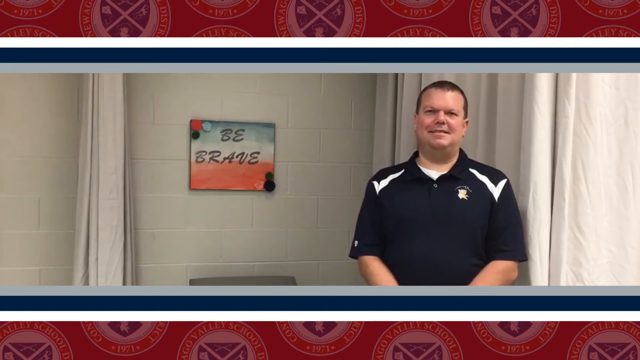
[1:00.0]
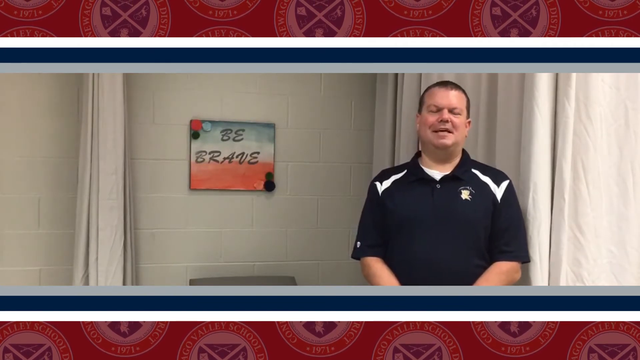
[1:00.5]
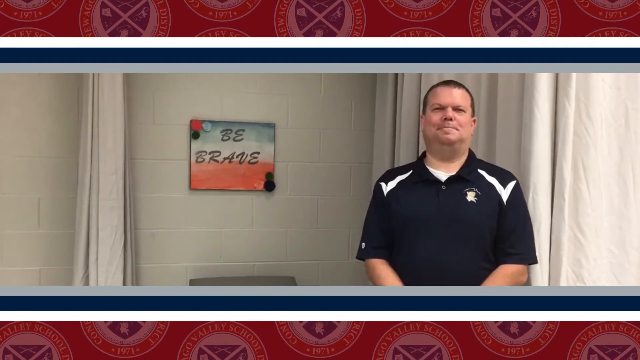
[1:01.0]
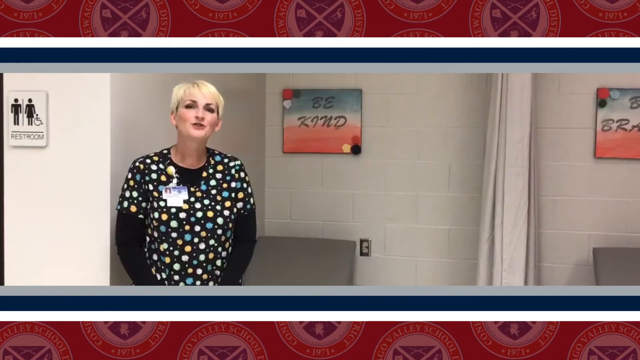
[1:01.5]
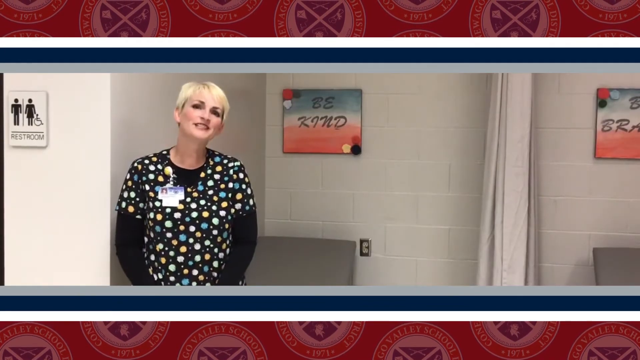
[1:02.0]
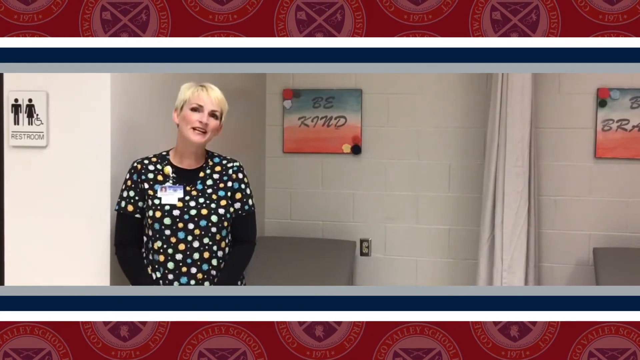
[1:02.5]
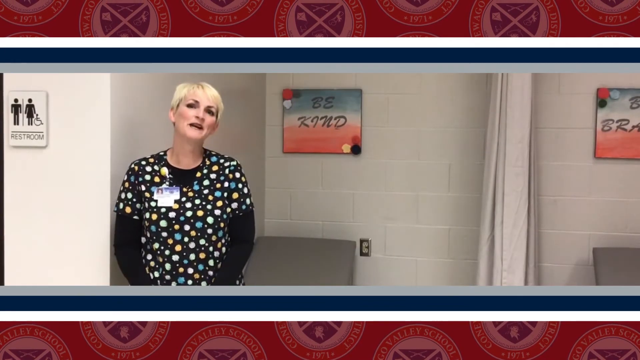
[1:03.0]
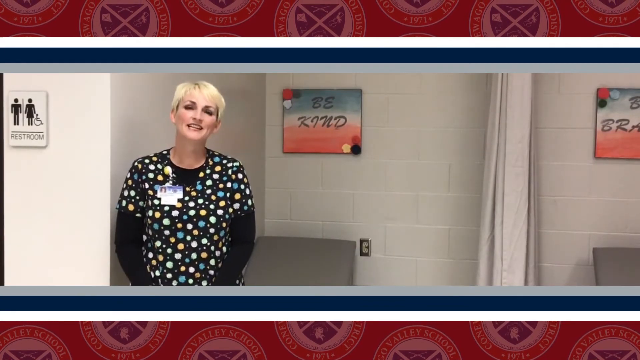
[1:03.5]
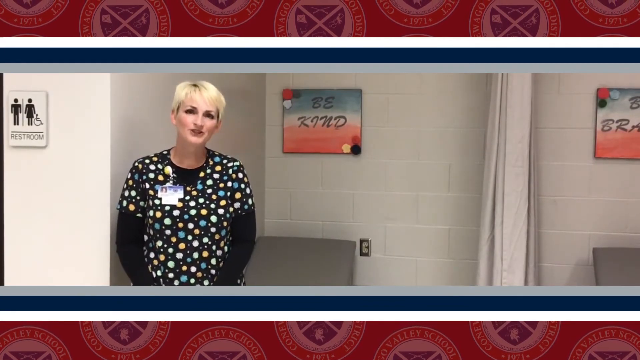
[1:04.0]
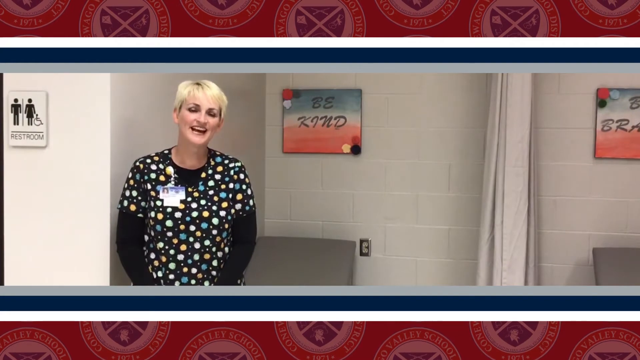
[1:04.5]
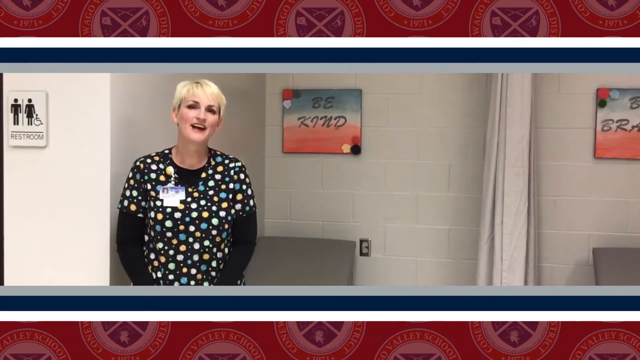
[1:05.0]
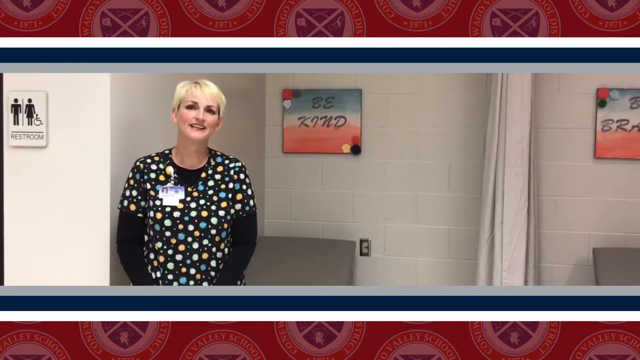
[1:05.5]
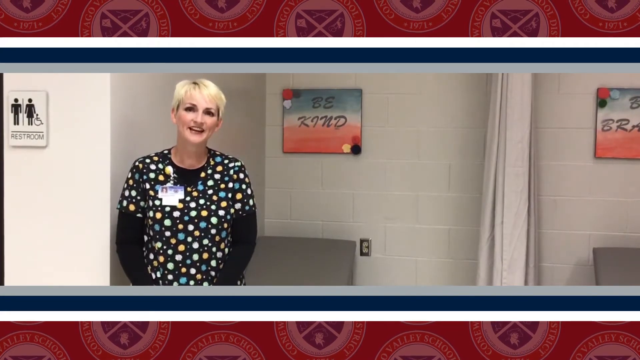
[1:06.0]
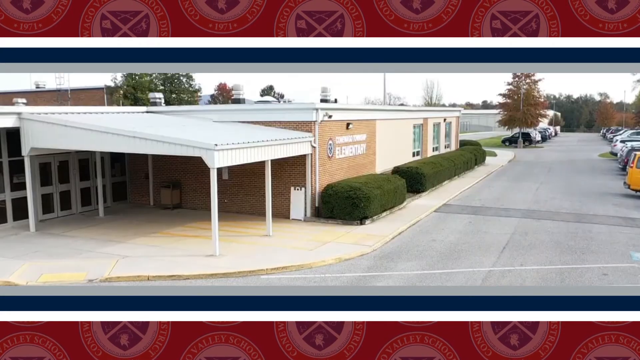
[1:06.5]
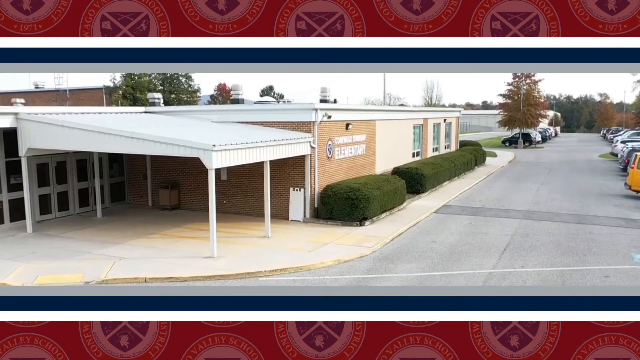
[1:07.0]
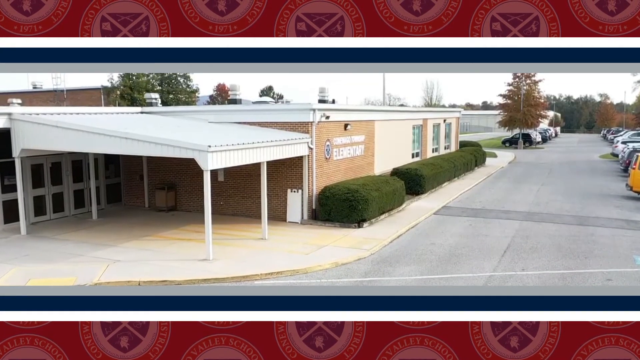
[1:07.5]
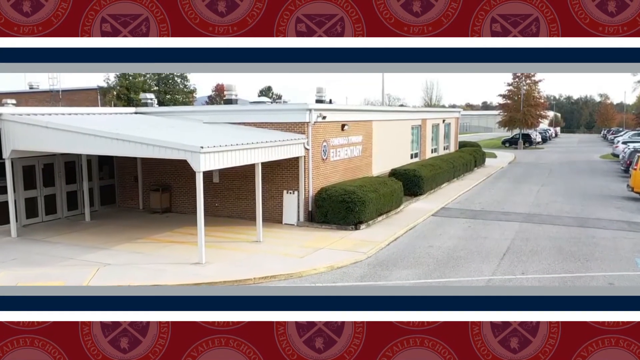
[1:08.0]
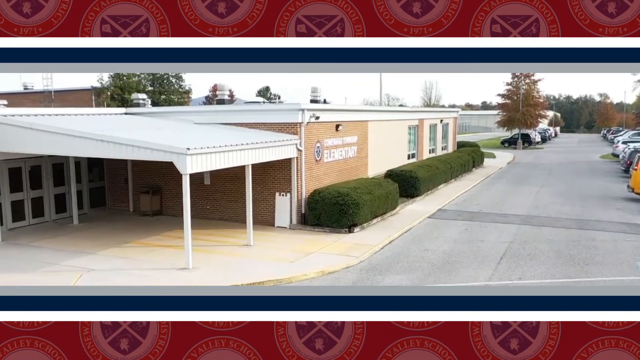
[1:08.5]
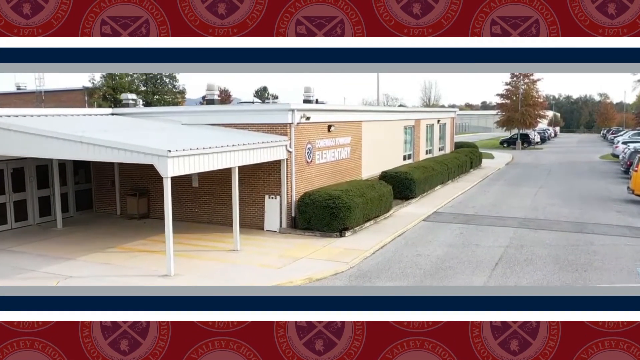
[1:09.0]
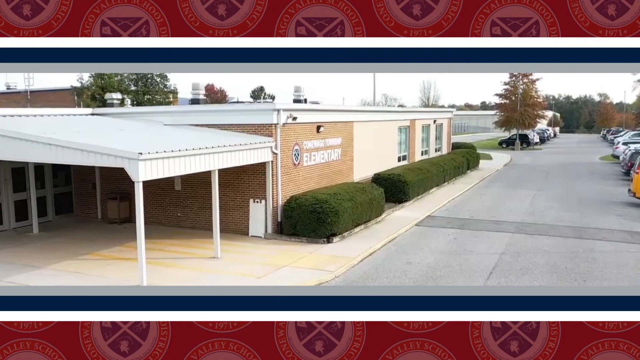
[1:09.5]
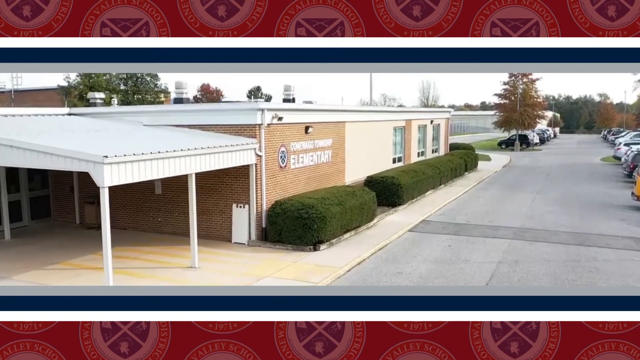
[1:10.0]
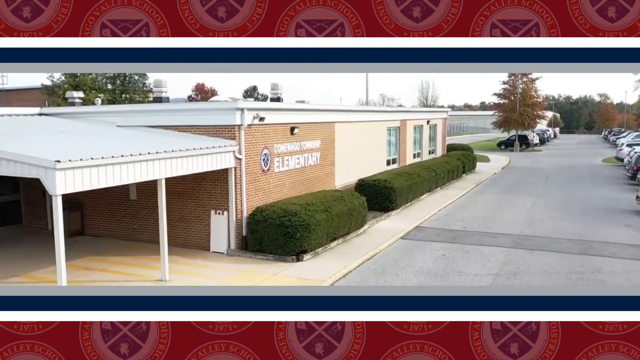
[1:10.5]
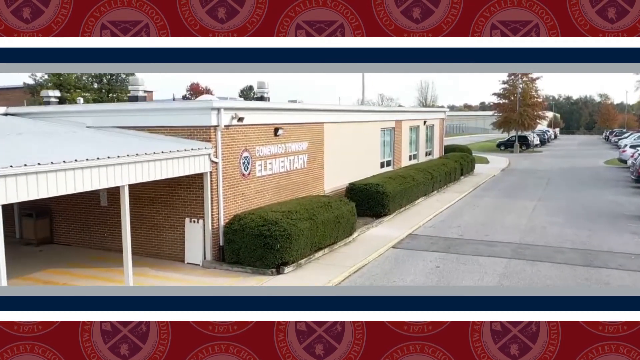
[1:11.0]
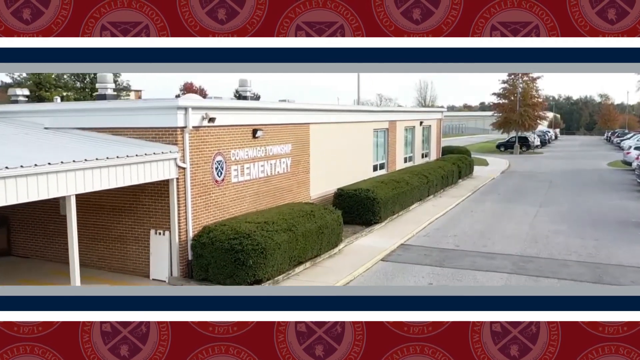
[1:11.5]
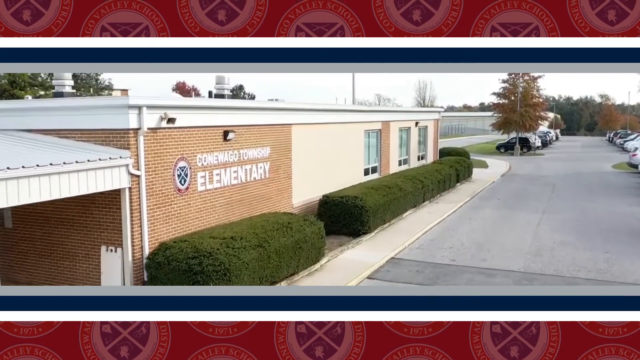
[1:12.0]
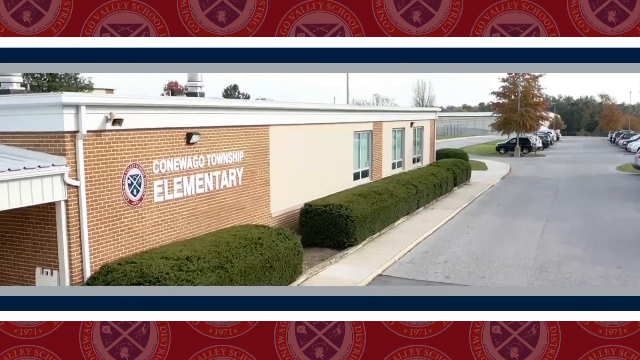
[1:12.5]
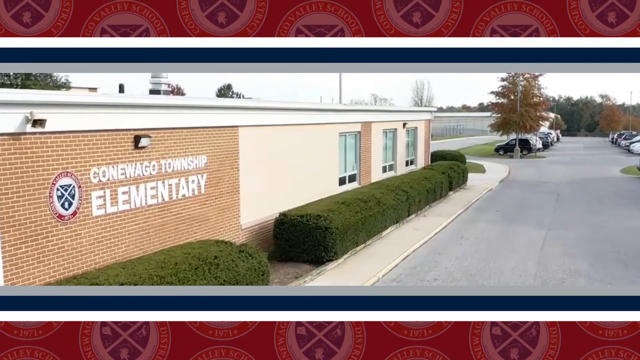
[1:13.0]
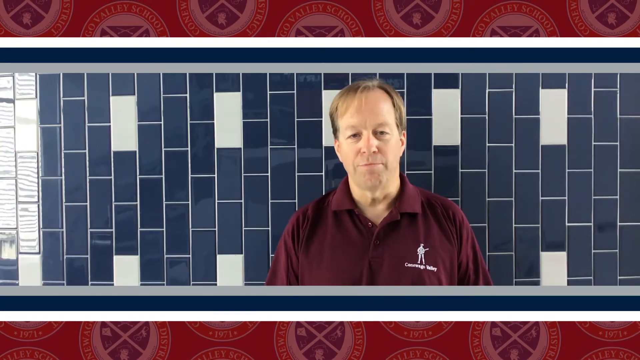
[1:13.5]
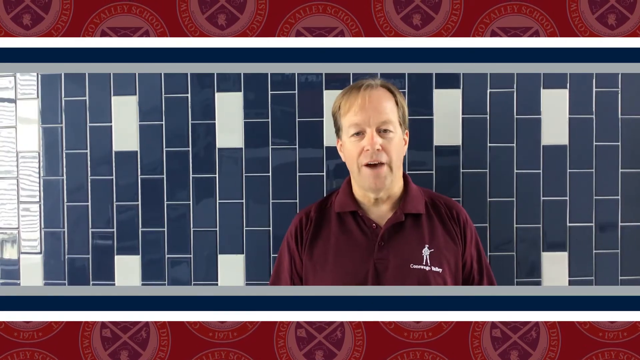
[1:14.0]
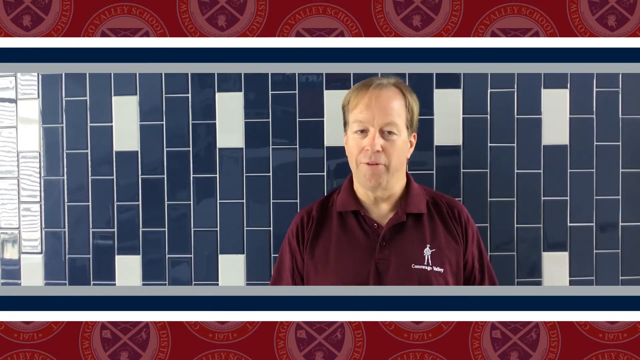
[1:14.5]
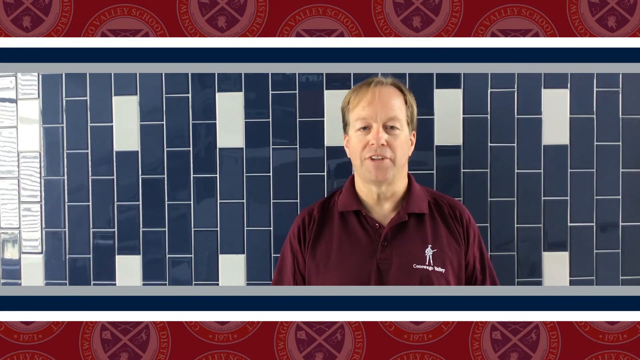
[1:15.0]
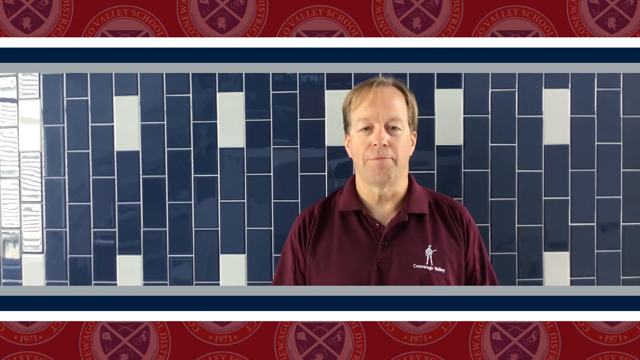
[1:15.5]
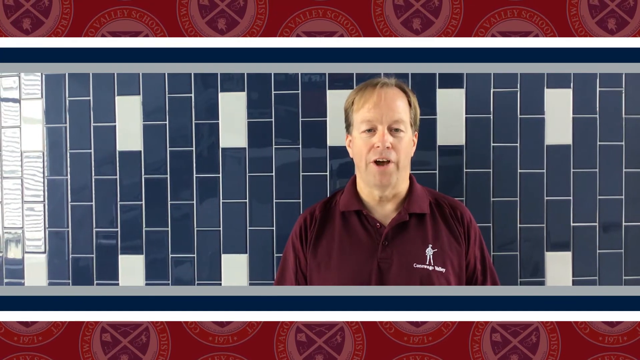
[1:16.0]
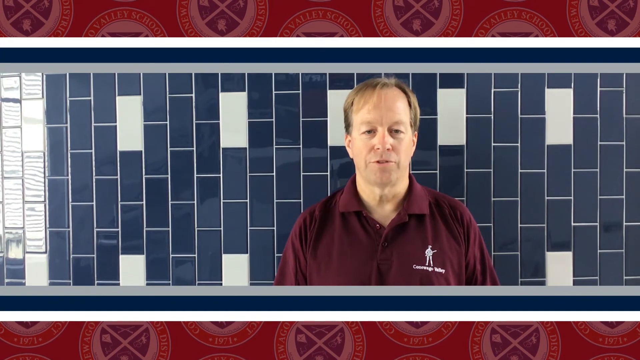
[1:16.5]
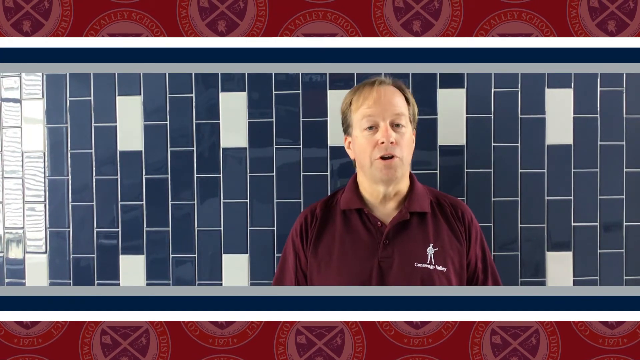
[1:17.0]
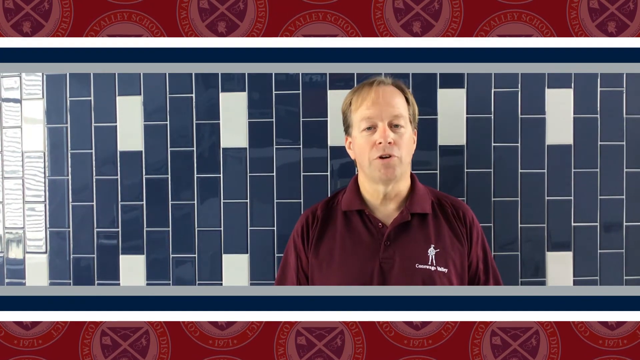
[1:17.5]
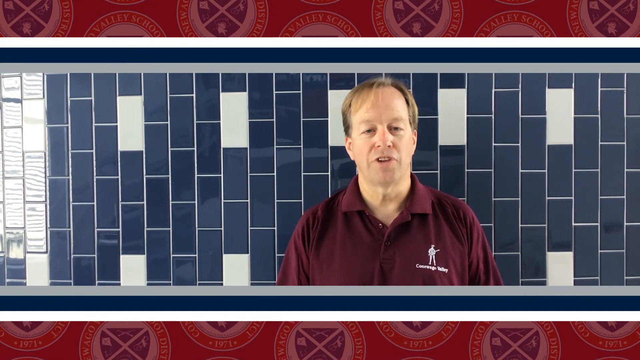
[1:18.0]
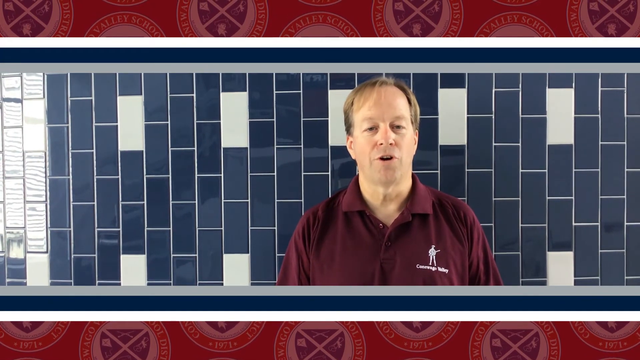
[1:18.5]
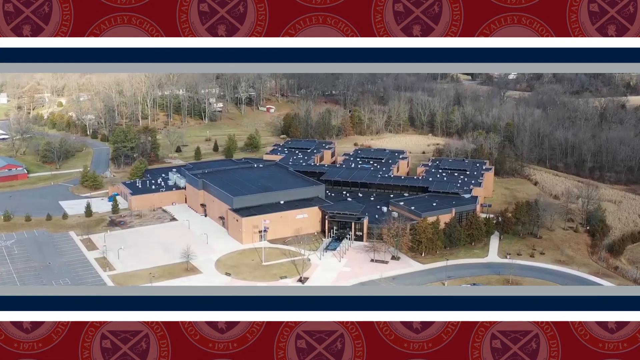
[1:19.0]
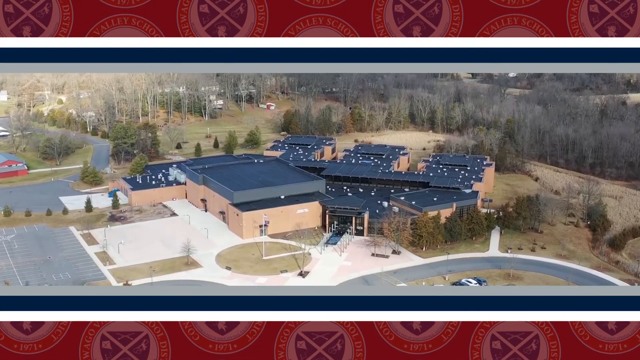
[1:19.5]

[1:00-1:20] The man continues speaking in a room with white concrete walls and curtains hanging down from above. The video quickly transitions to a woman who appears to be in the same room but in a different spot. She also looks toward the camera and speaks. She has a lanyard attached to her shirt and seems to have her arms, or her hands, folded in front of her. Next comes another outdoor view, slightly elevated but near the ground. To the left is another building with an entrance on the left and a canopy above the entrance; to the right is a parking area that seems to be full of cars. The camera moves forward along the road, angled slightly toward the building. The video then goes back indoors to a man speaking to the camera in front of a blue and white tile wall. He wears a burgundy polo shirt with some sort of logo on his chest.